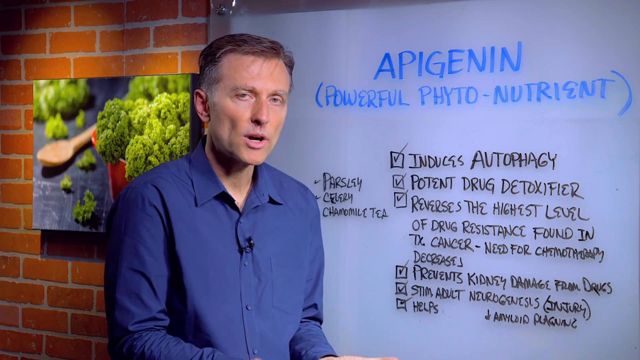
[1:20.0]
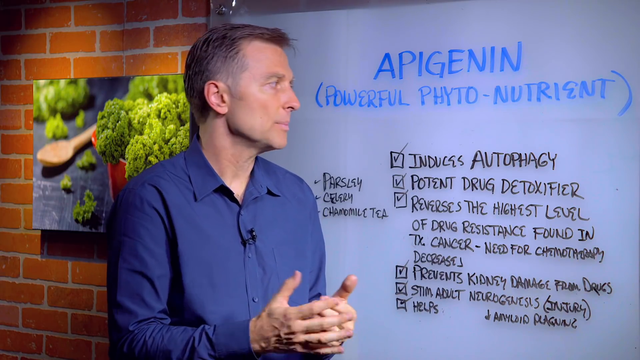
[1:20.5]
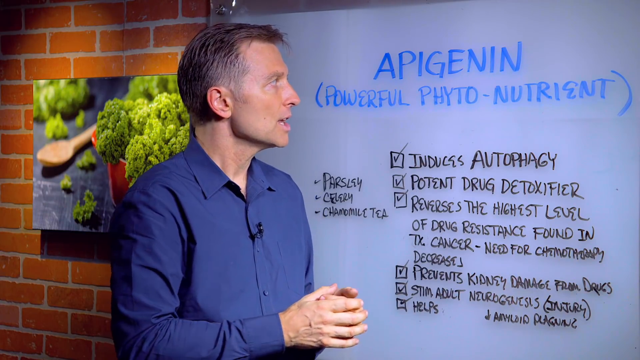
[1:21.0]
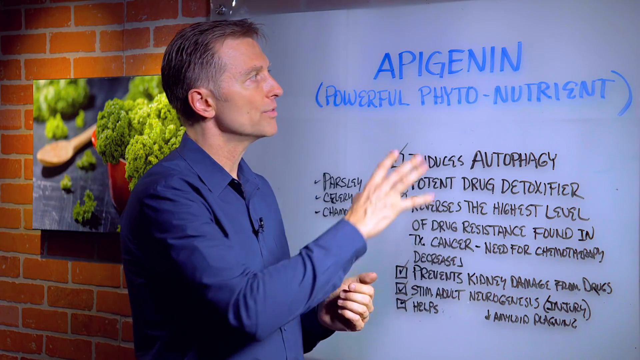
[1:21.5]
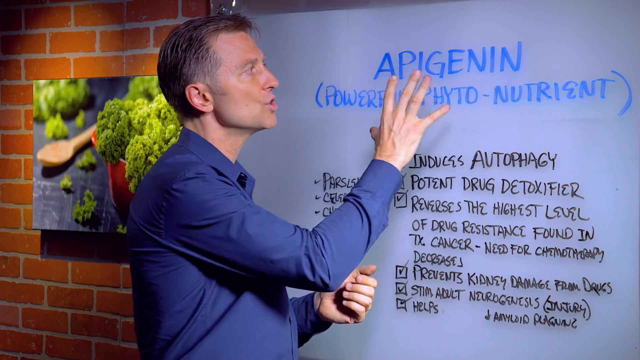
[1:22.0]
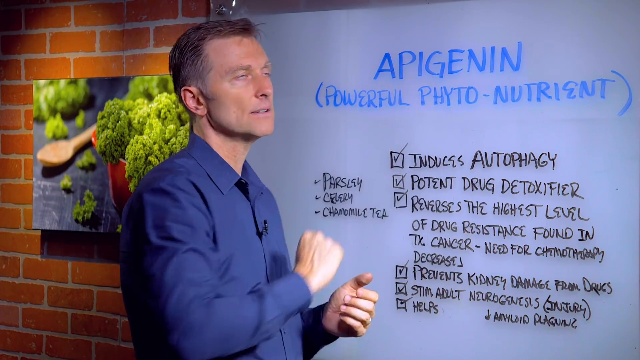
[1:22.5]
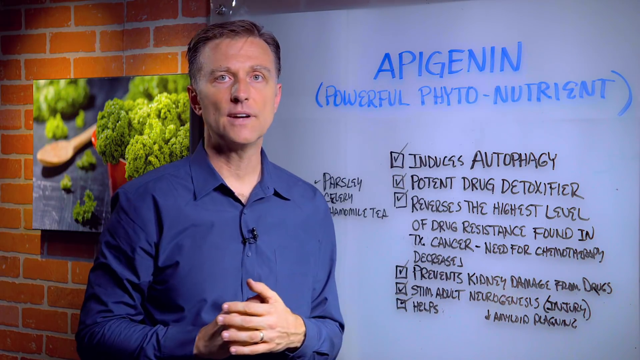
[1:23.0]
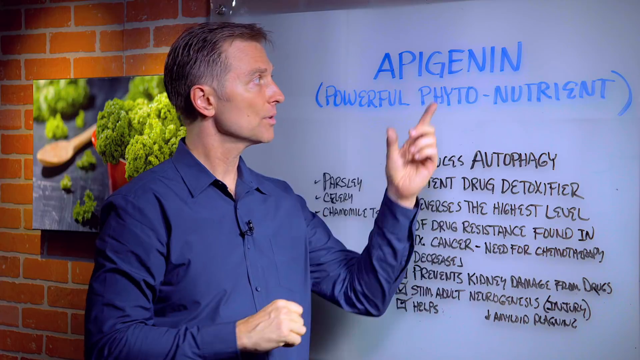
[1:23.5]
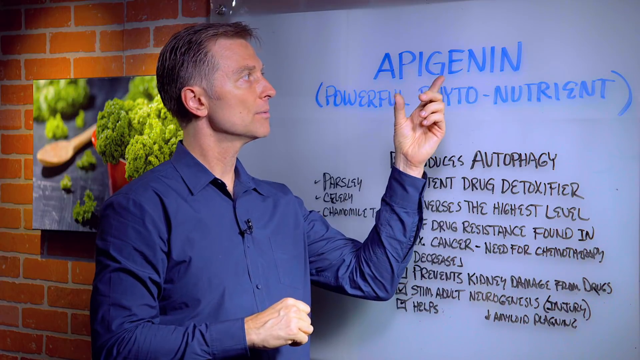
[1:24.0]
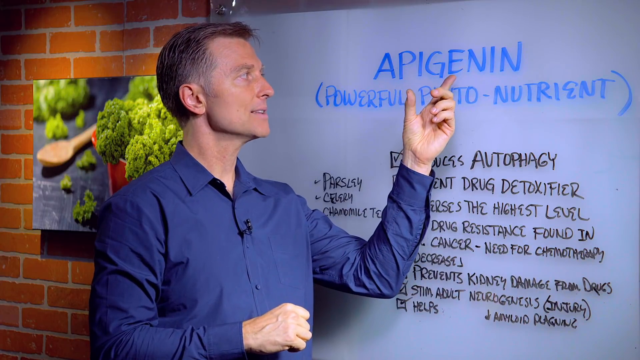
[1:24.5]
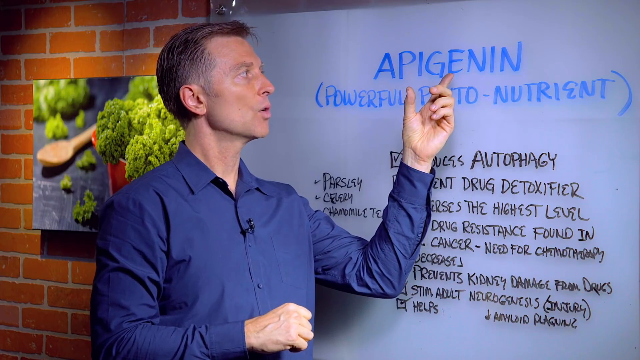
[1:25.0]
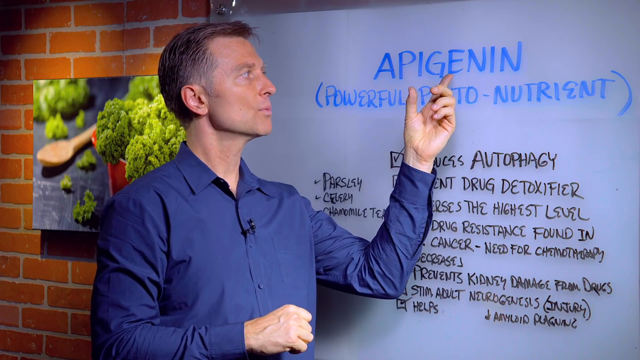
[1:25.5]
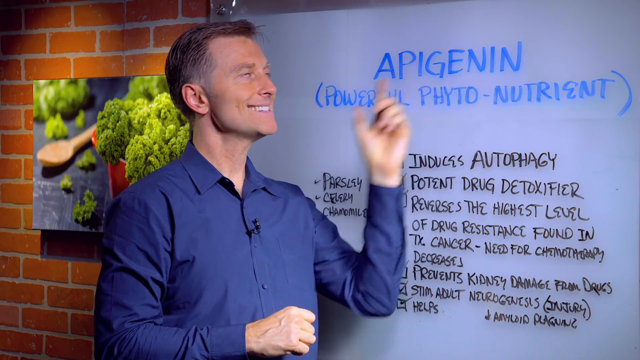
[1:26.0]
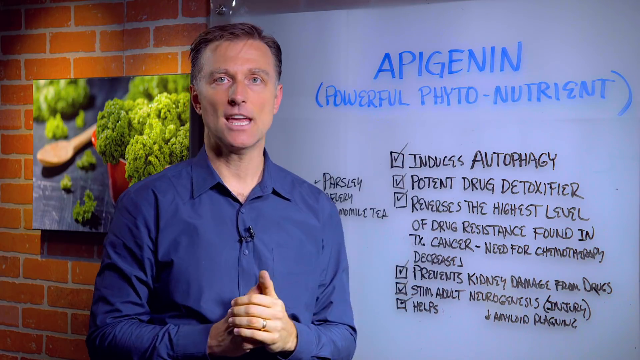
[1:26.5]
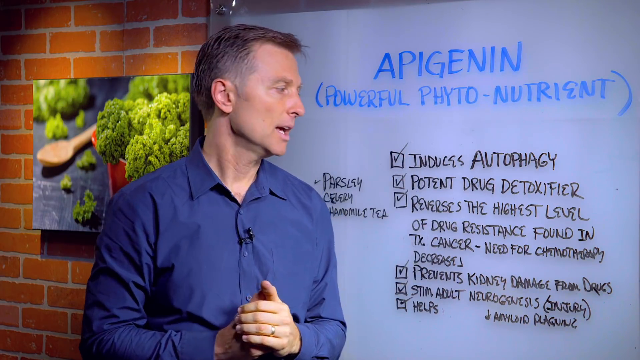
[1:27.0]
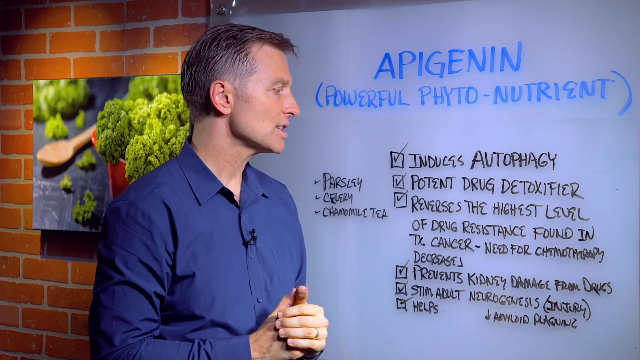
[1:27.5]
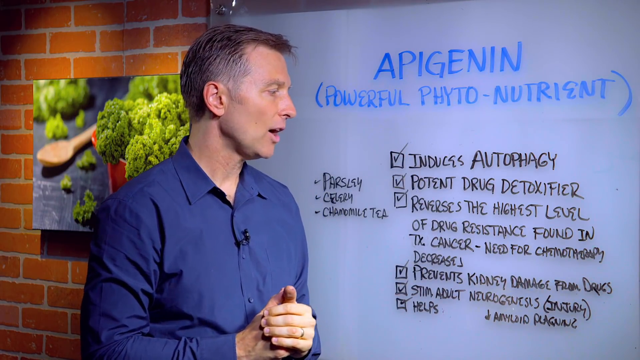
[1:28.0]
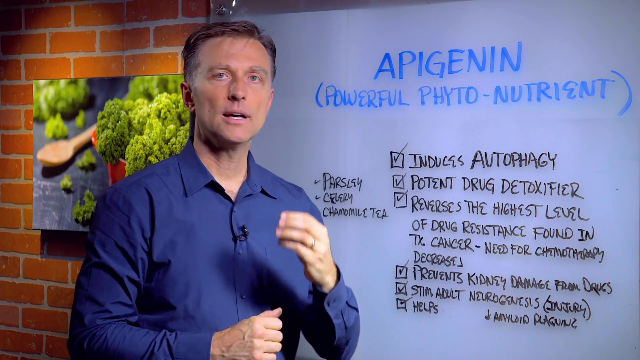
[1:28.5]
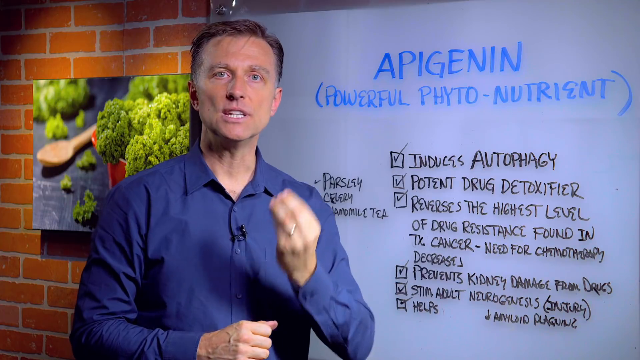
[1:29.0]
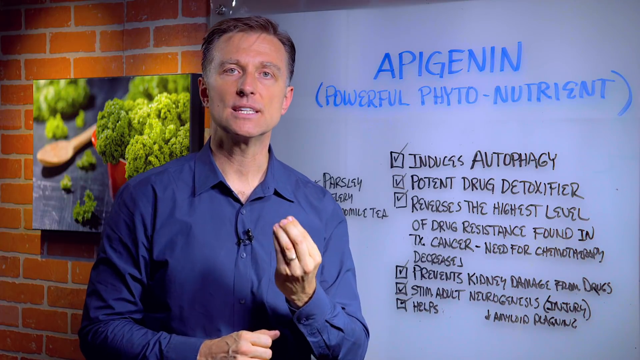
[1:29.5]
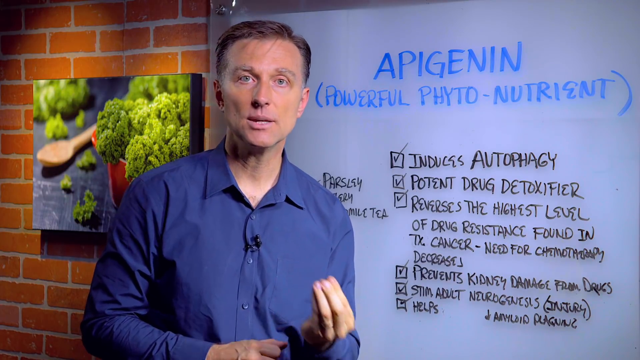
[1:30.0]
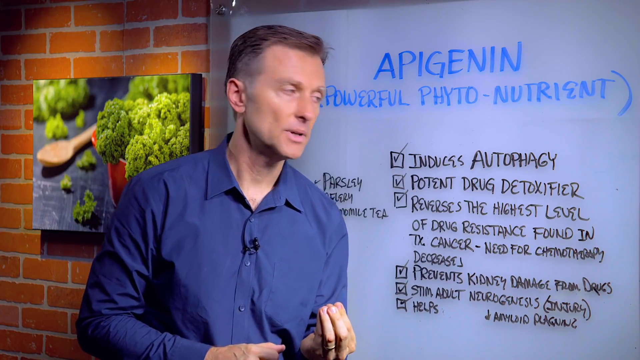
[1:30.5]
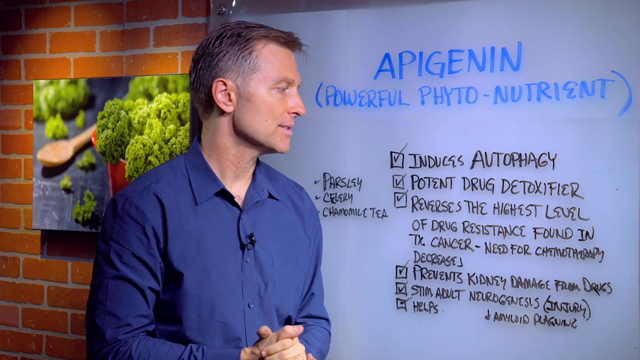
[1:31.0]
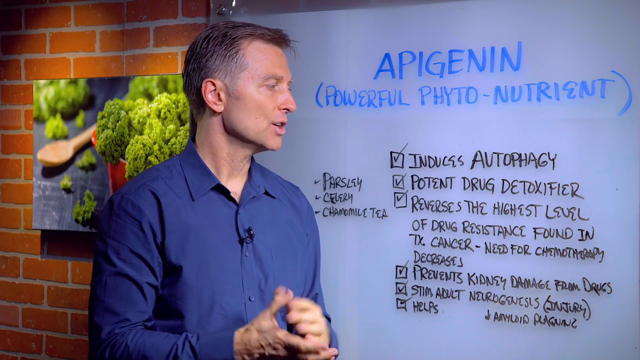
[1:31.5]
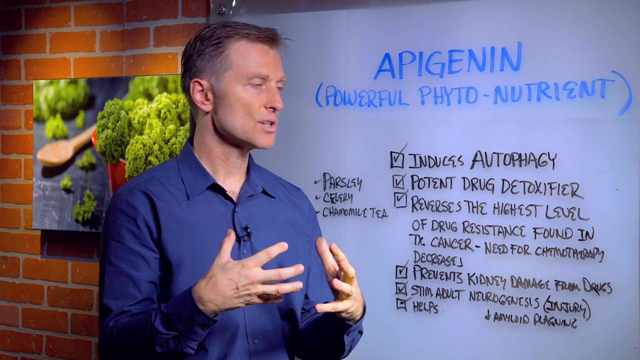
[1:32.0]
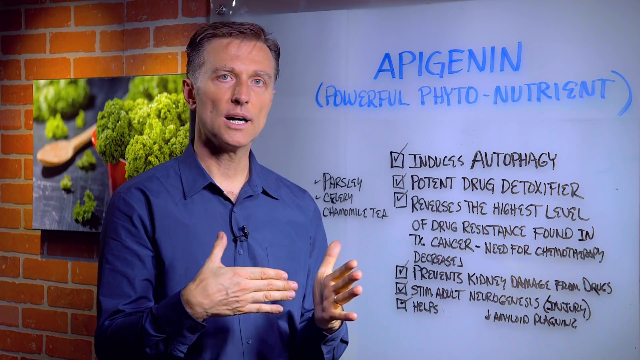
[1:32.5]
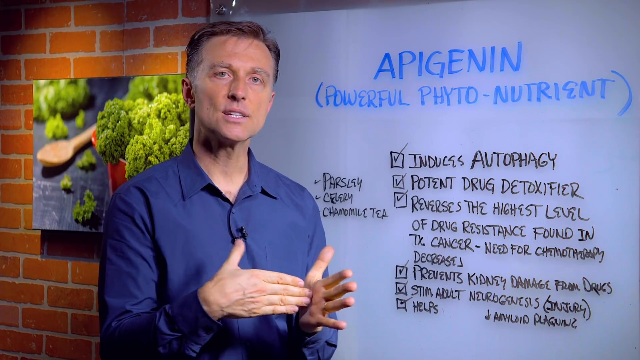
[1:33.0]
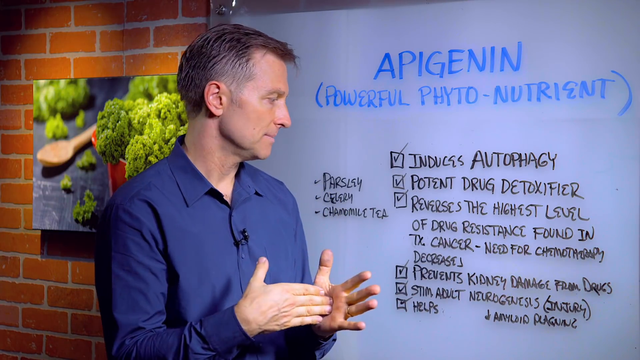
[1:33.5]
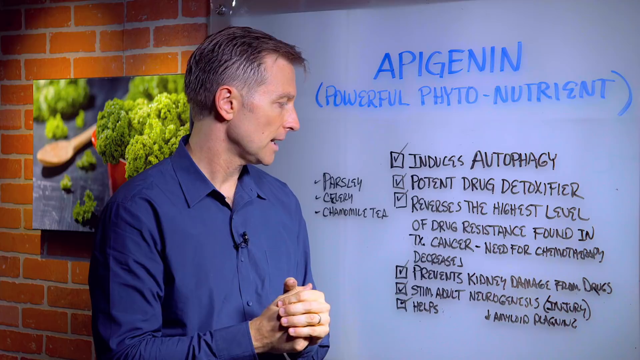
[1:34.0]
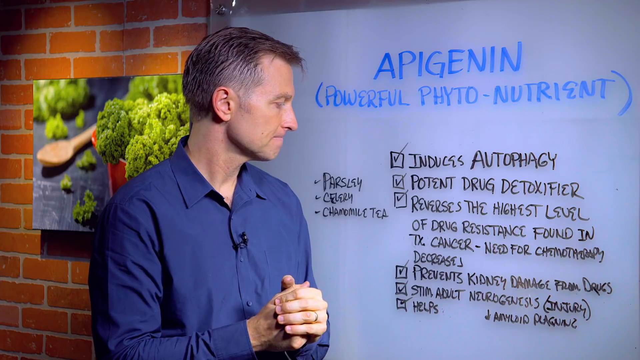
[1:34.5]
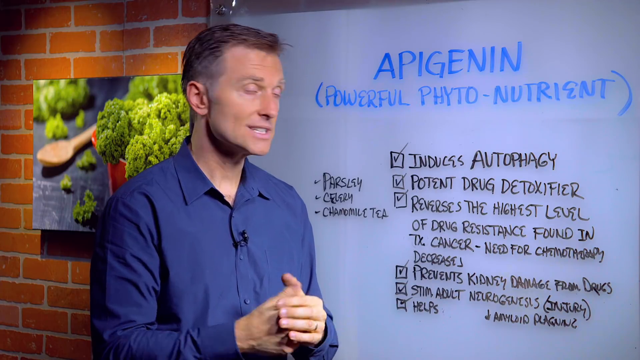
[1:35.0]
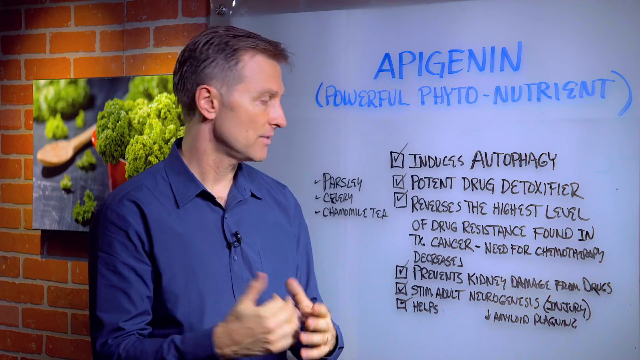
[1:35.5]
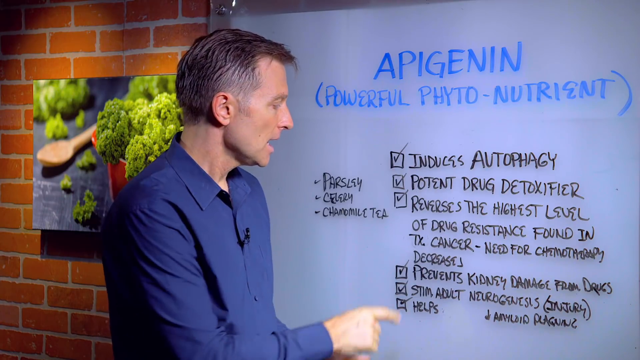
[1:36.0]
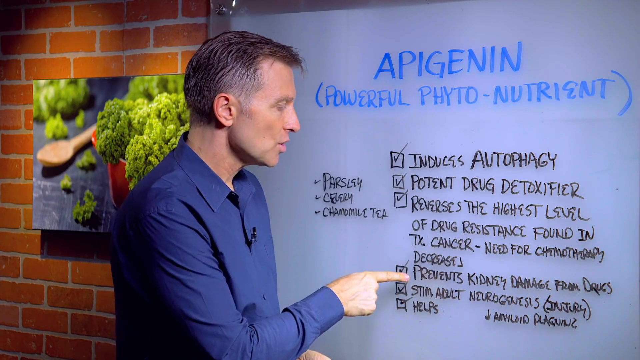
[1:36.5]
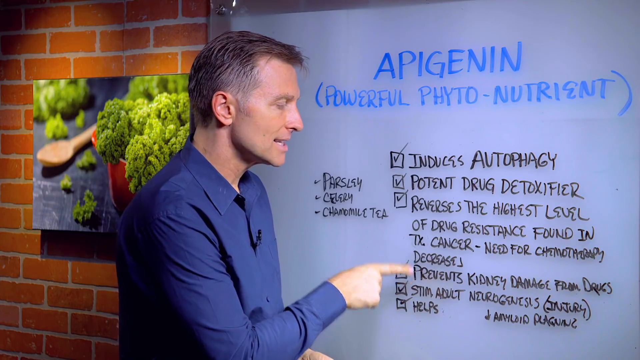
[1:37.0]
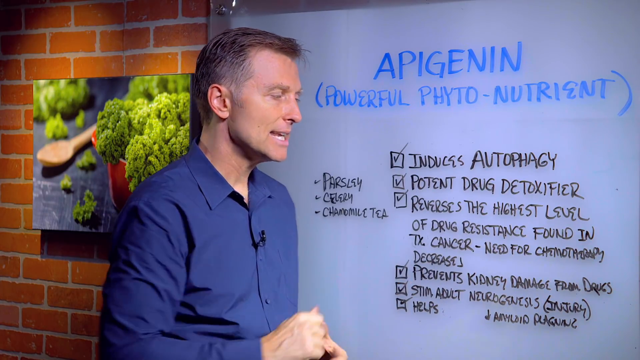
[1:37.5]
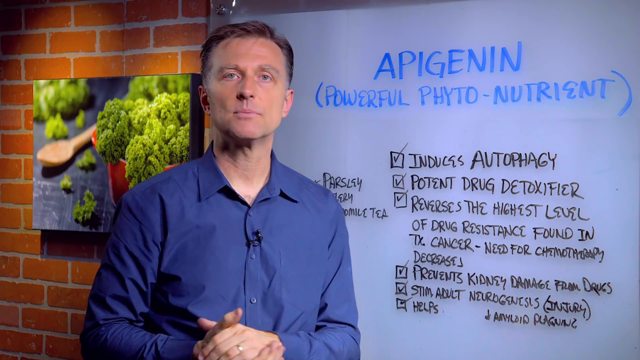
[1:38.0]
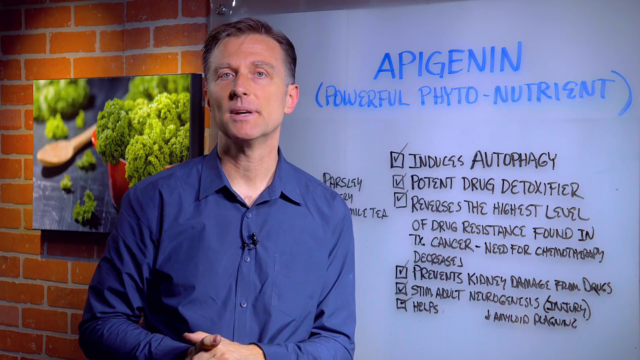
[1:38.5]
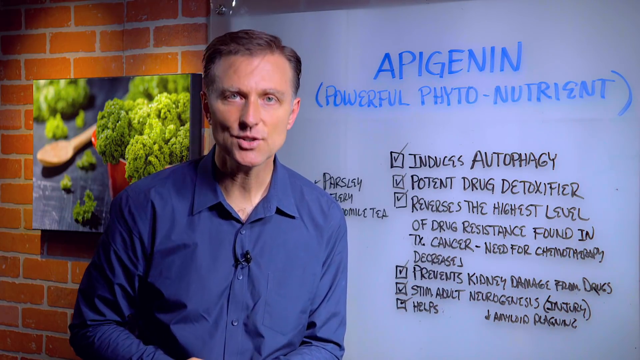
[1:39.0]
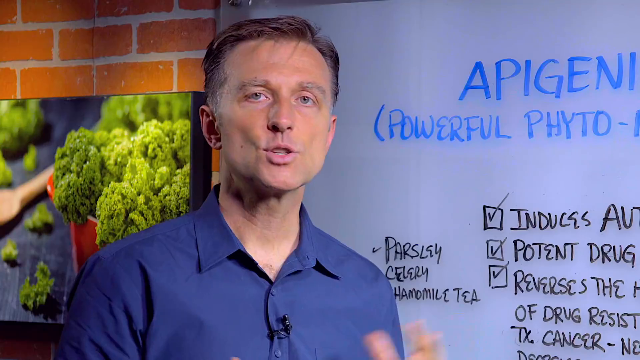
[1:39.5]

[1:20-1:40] The man keeps talking to the viewer about the whiteboard, headed "apigenin powerful phytonutrient", and points to the fourth point, "prevents kidney damage from drugs". He uses his hands to make his points, at one point pushing the fingers of his right hand into his left palm. On the left-hand side of the whiteboard is a list of parsley, celery and chamomile tea with check marks, apparently things to eat that can help. The picture of the broccoli is still visible on the brick wall on the left-hand side of the whiteboard. The words on the whiteboard are written in blue and black.